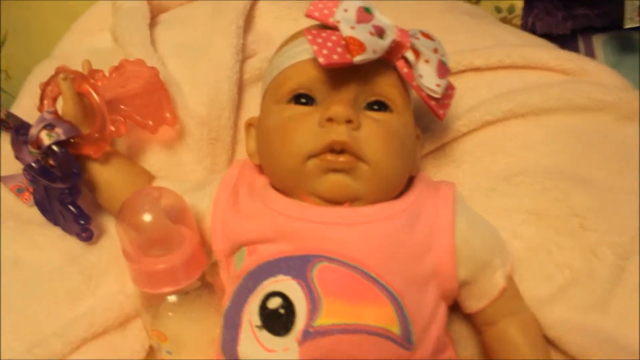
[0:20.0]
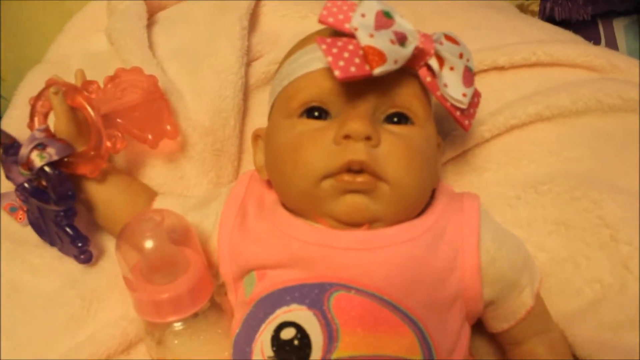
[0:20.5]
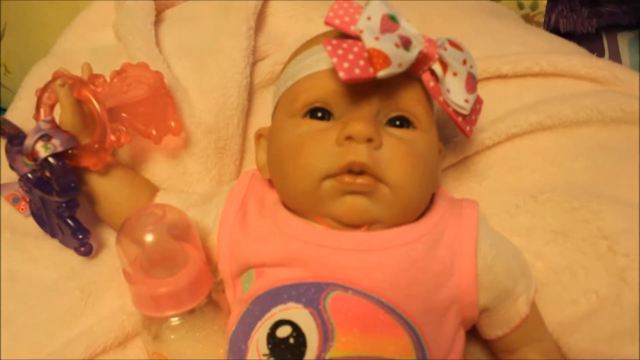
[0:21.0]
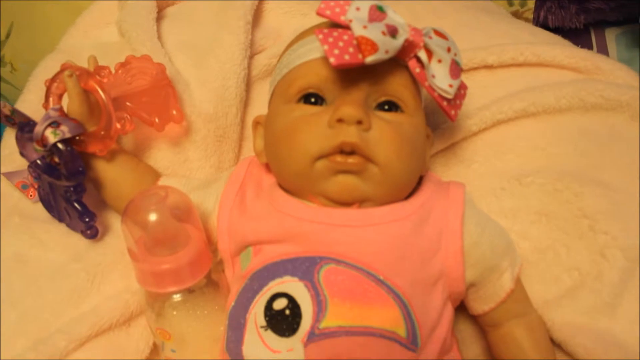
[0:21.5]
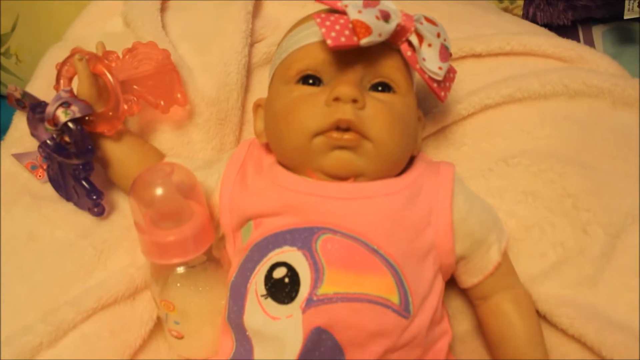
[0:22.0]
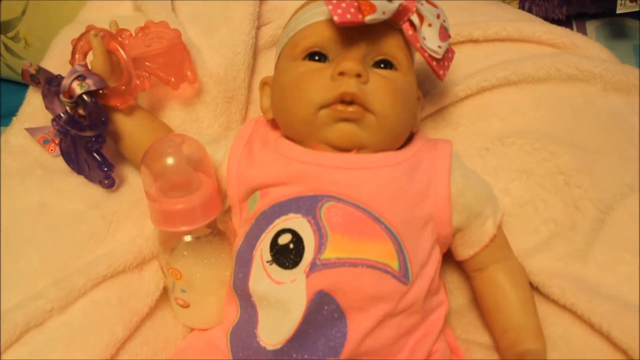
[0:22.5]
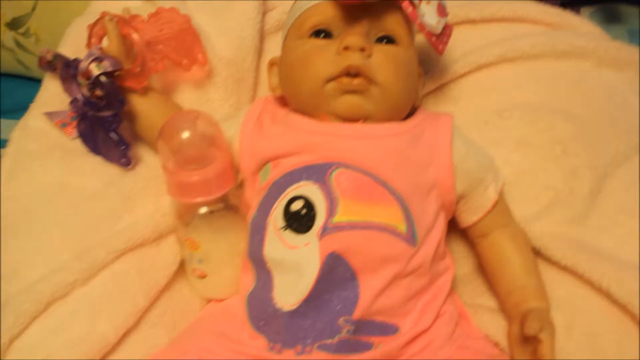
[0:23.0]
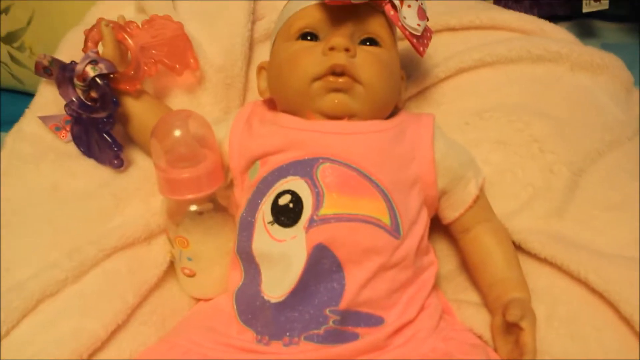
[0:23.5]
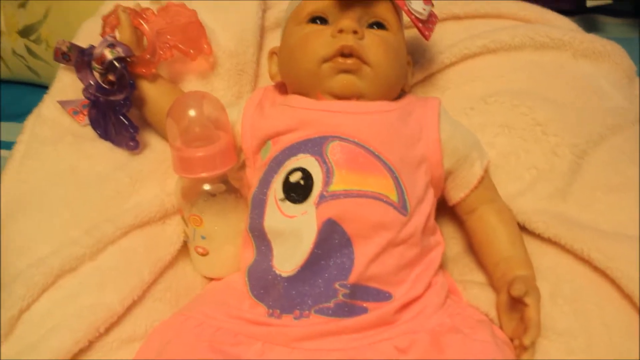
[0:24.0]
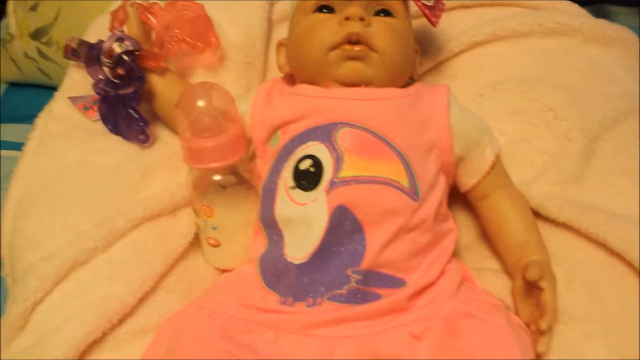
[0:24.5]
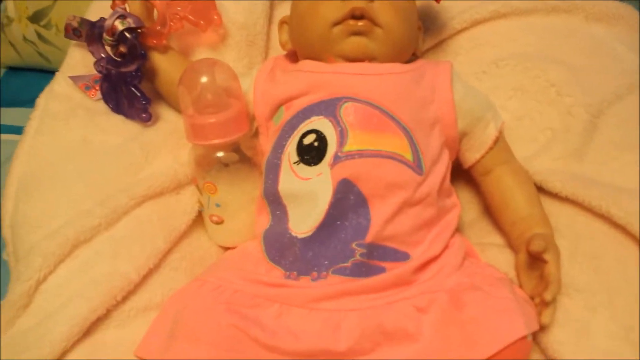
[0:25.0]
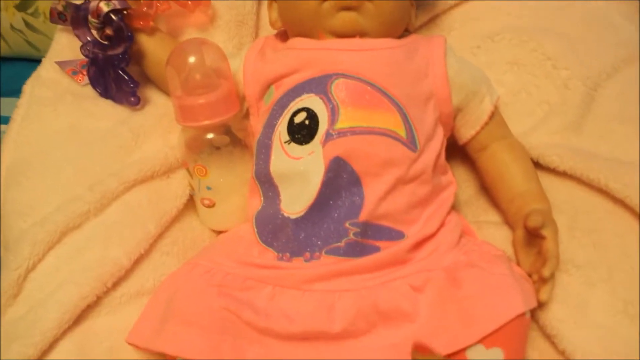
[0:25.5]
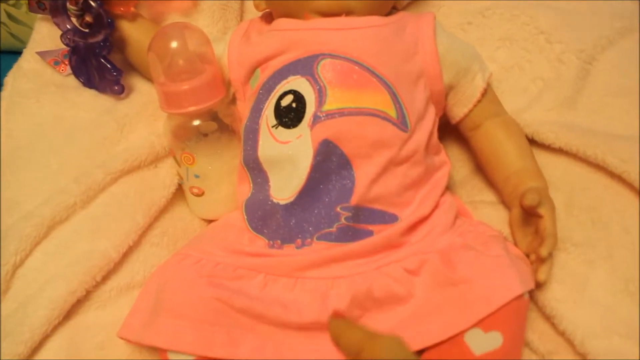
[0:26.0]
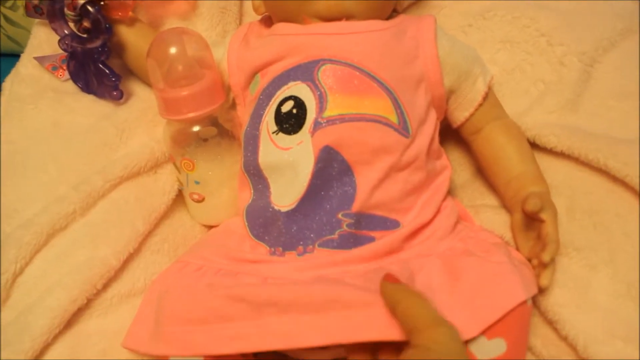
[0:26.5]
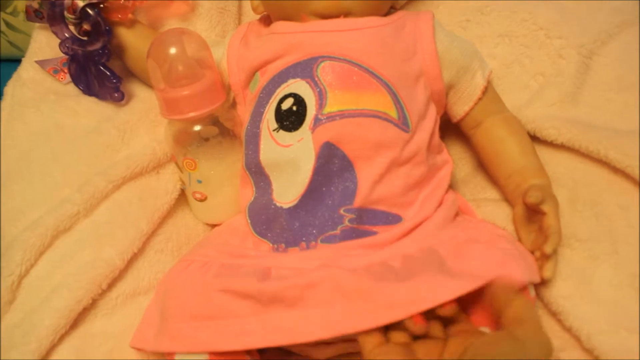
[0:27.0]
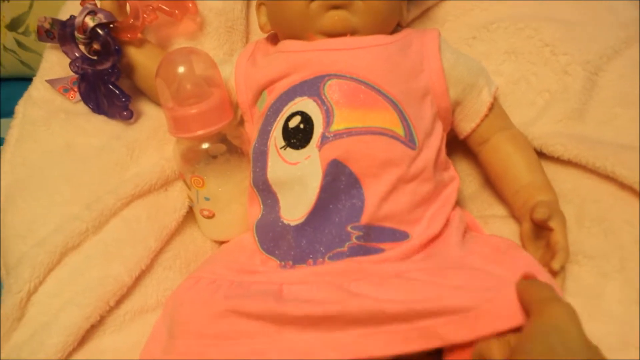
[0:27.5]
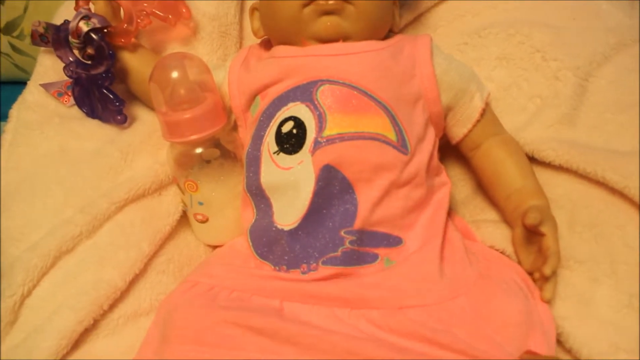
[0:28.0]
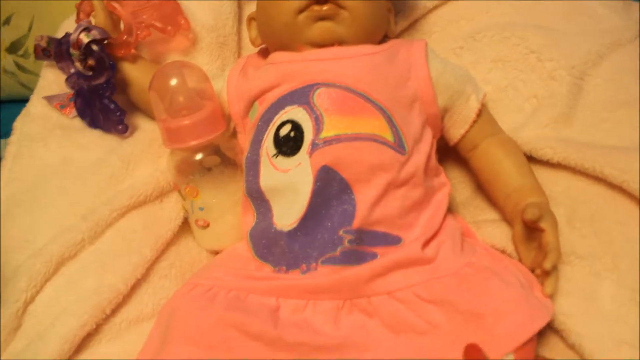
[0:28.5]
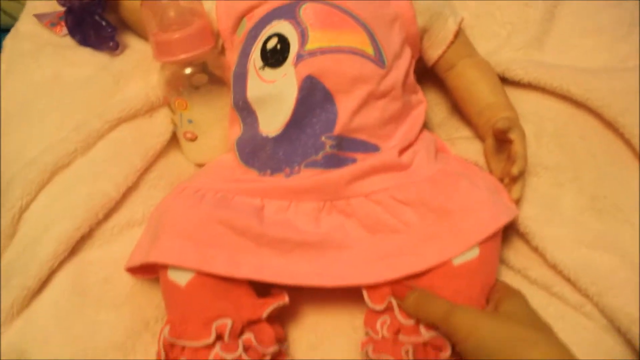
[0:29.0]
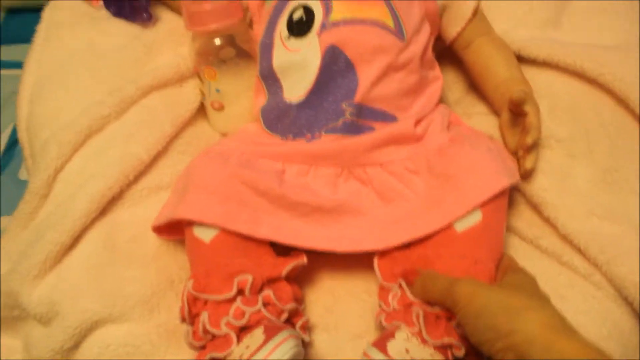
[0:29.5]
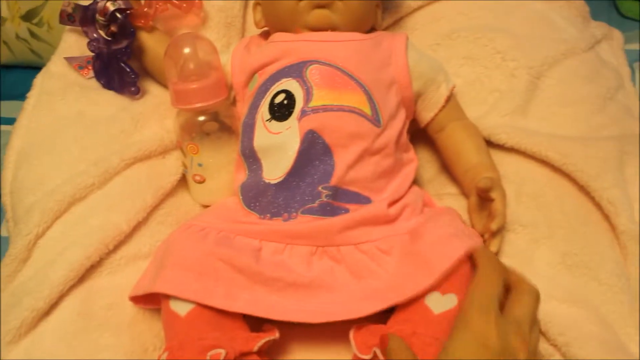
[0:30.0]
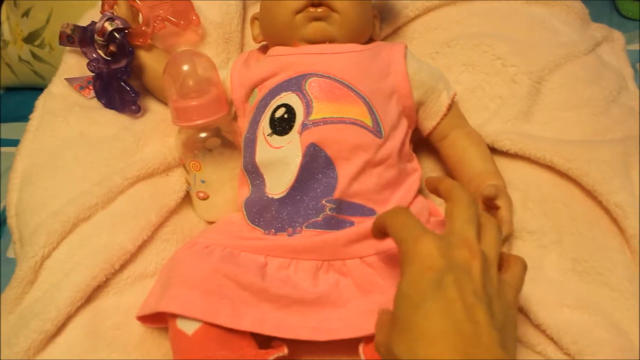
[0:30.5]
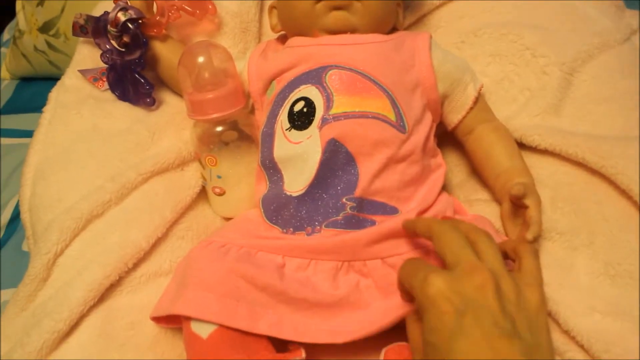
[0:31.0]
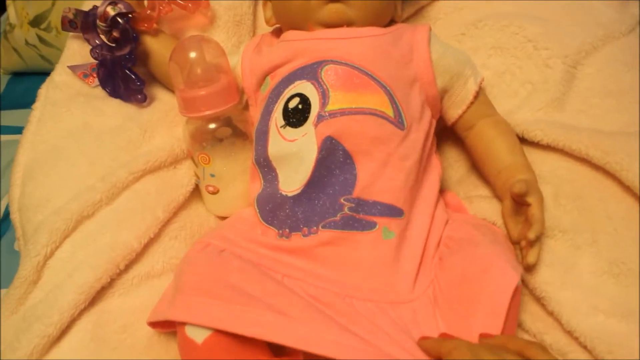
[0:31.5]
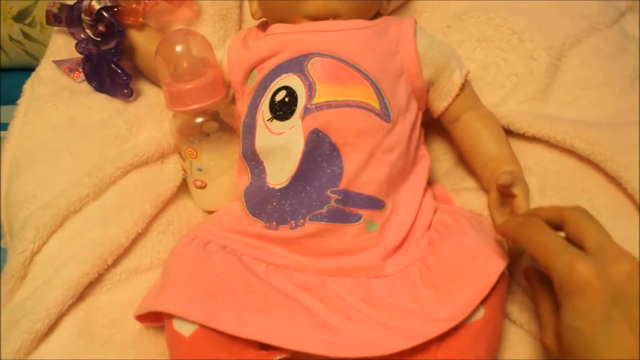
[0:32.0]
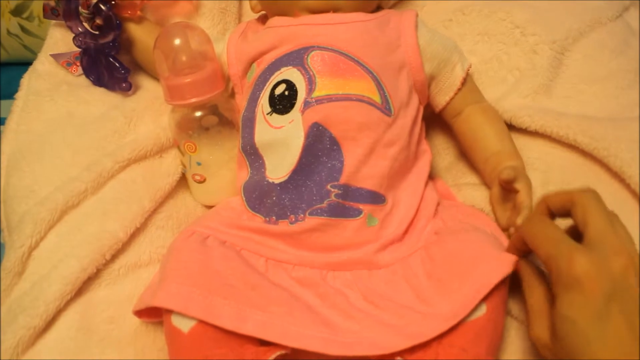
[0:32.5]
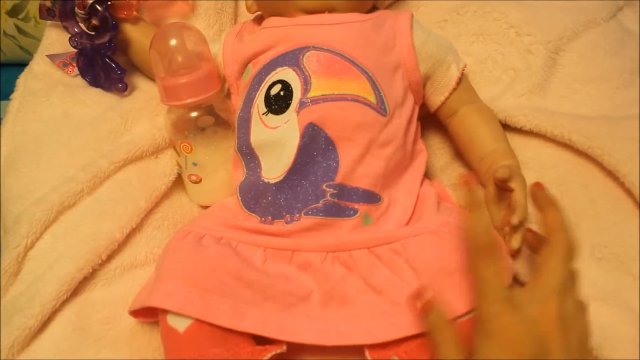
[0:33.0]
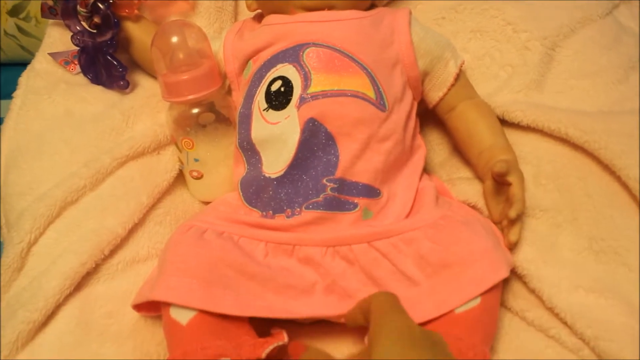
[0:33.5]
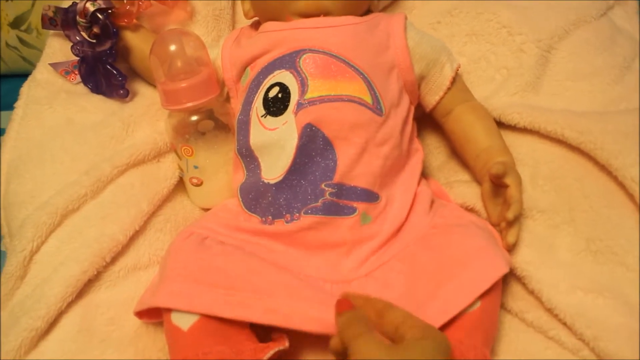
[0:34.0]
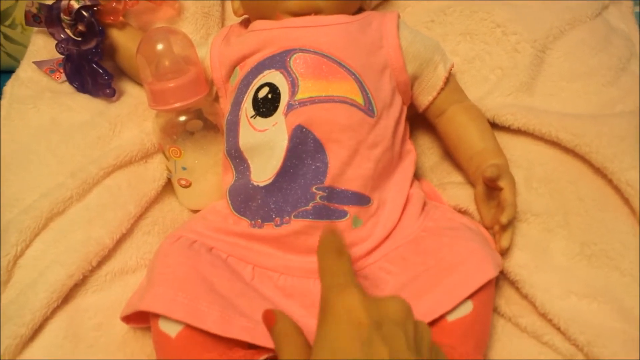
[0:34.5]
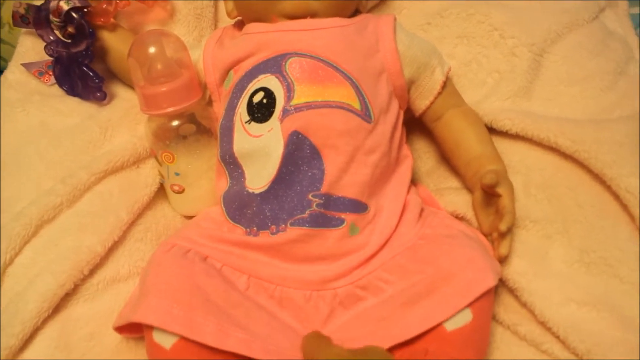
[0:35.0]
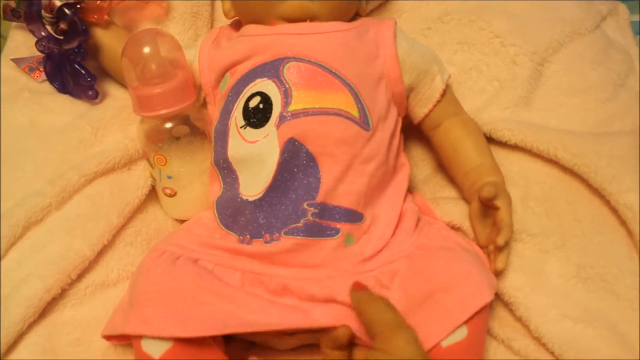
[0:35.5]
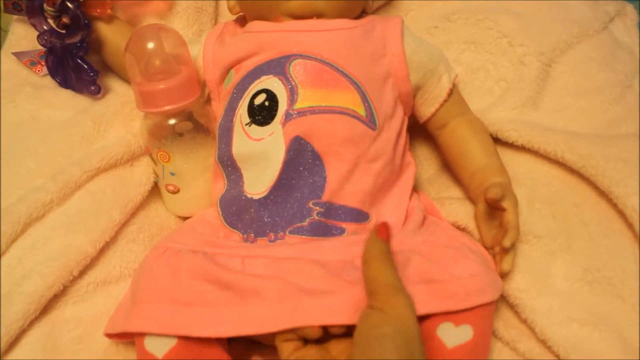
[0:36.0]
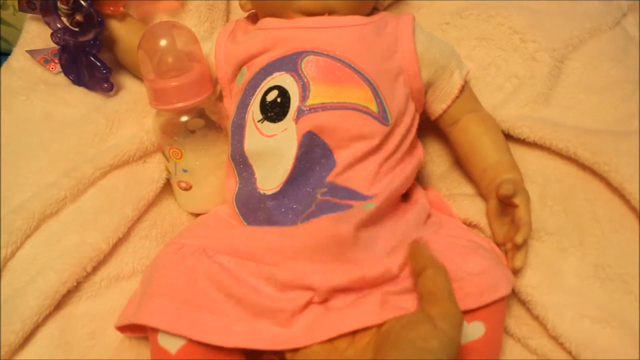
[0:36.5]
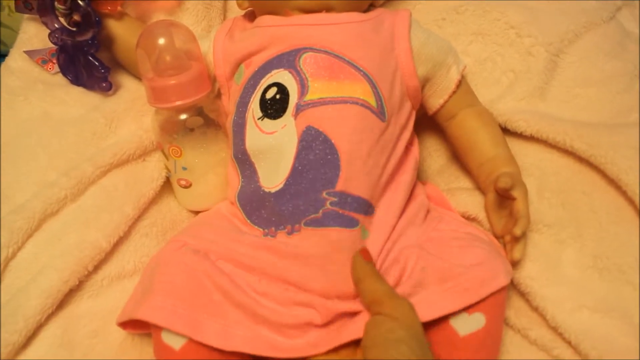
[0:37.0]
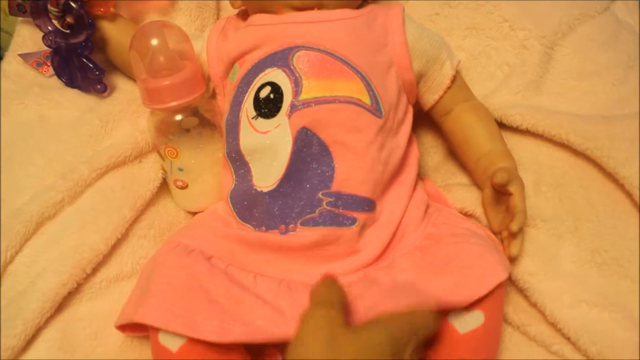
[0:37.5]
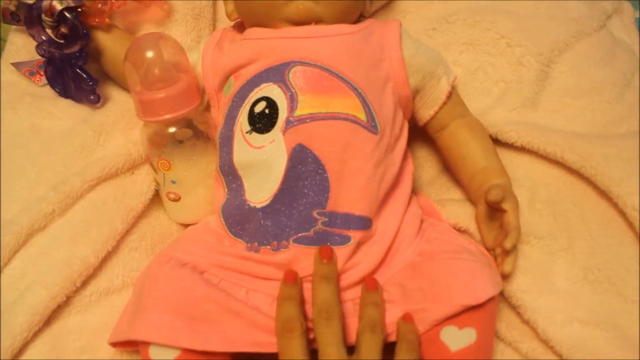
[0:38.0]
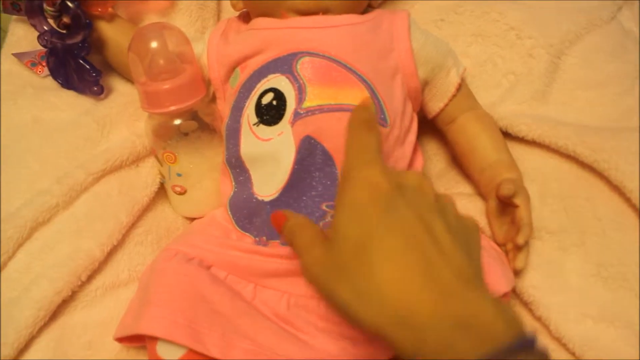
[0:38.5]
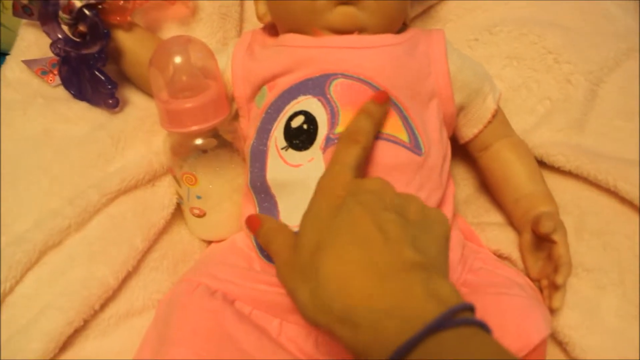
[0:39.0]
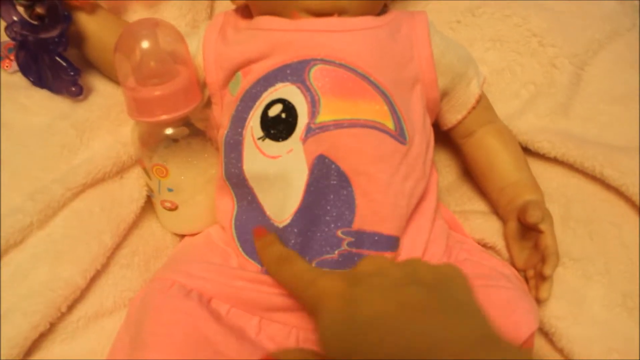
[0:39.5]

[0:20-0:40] A person holding the camera in their hand appears to be showcasing the details of the baby doll's clothes, primarily a little pink dress with a flamingo on it. The person runs their hand over the dress and over the flamingo logo on it. A glass of milk is to the side of the doll, which is on top of a blanket on a bed. The doll wears a pink bow with a white headband, pink boots and a white undershirt.